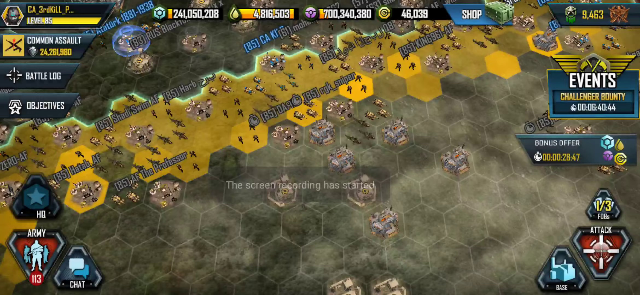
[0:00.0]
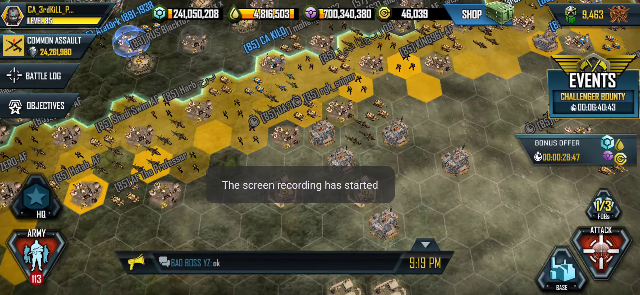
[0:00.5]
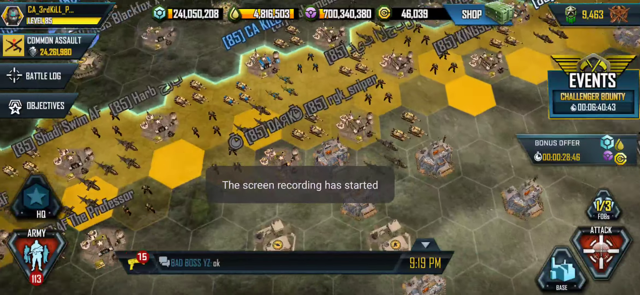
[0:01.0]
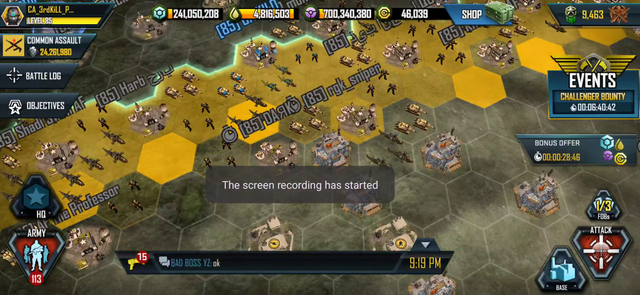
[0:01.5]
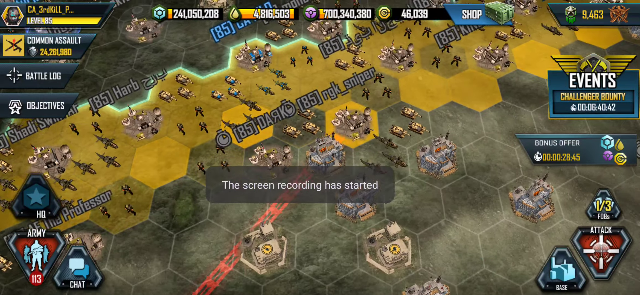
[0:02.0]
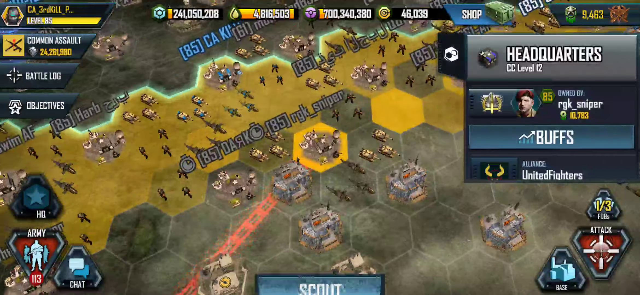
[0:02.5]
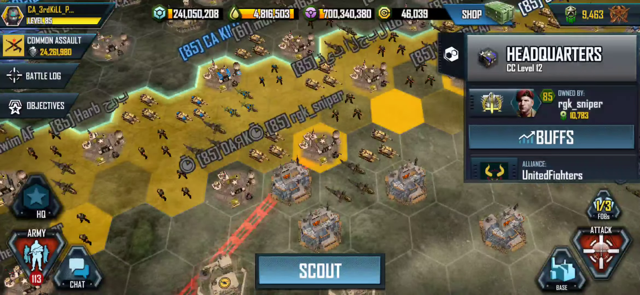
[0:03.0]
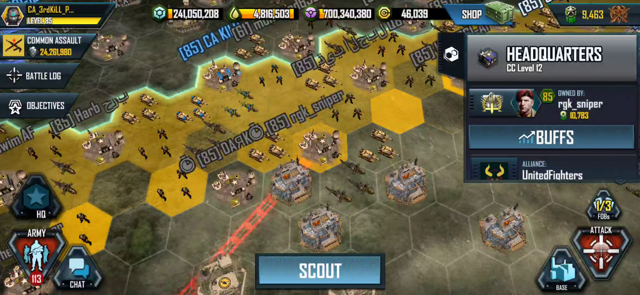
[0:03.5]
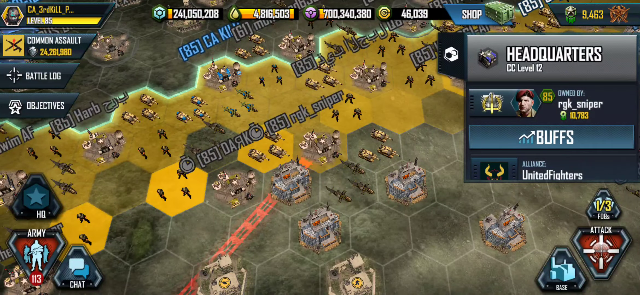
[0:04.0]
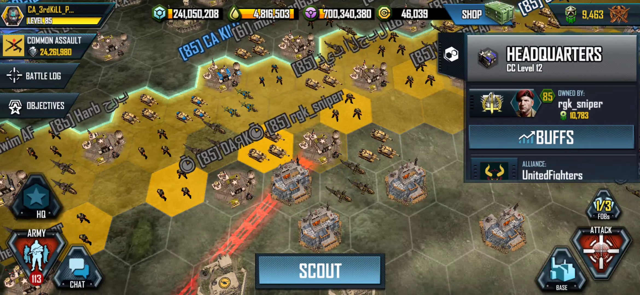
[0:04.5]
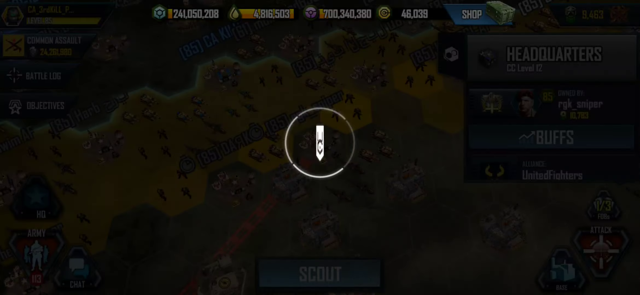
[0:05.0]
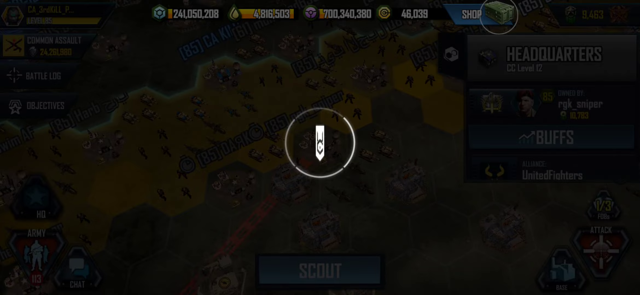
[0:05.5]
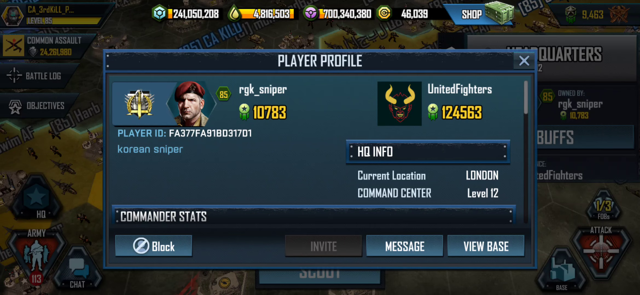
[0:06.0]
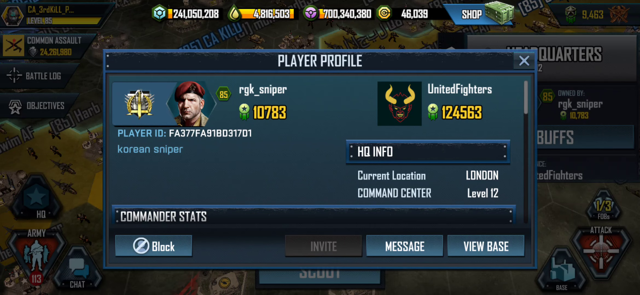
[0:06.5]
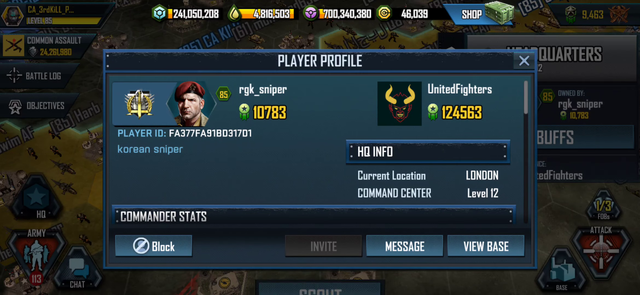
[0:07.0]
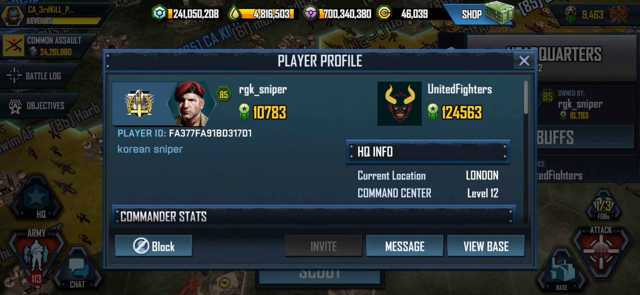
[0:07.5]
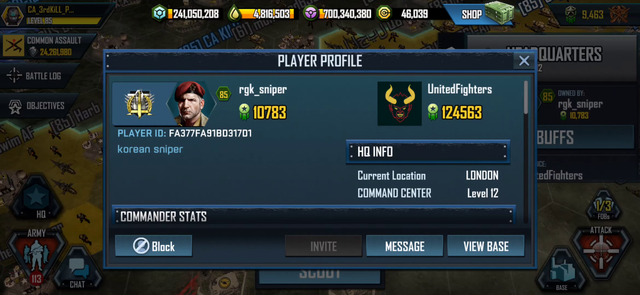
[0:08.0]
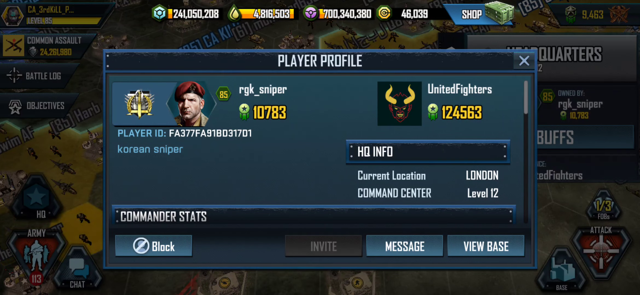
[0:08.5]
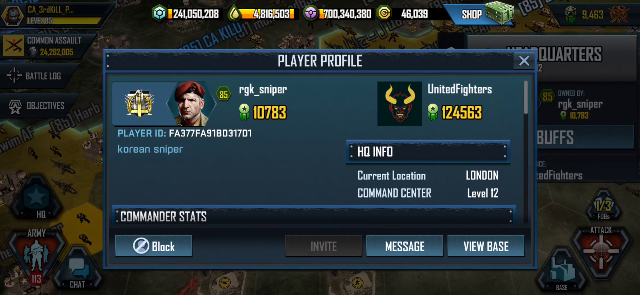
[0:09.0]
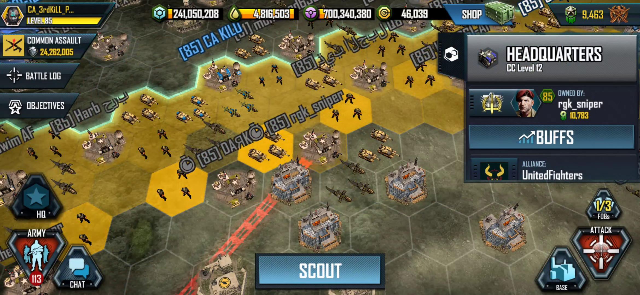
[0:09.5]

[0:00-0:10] Gameplay of an unidentified game, filmed in a very wide screen mode, appears to be a strategy game. The field is a map of hexagons with different buildings and items being built on them. The player's name is CA_thirdkill_P. There is a battle log and there are objectives, and what seems to be selected is a common assault weapon. On the right of the screen it says "events", "challenger points" and "challenger bounty", and there is a timer. There is a bonus offer, and many scores run along the top in different colors: blue, yellow, pink and another yellow, each with a different icon. The player selects another player and looks at his profile: this player is level 85, part of the United Fighters, his headquarters is currently located in London, his command center is level 12, and his name is RGK Sniper.